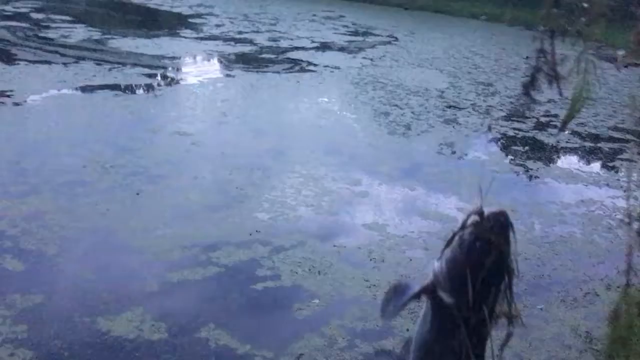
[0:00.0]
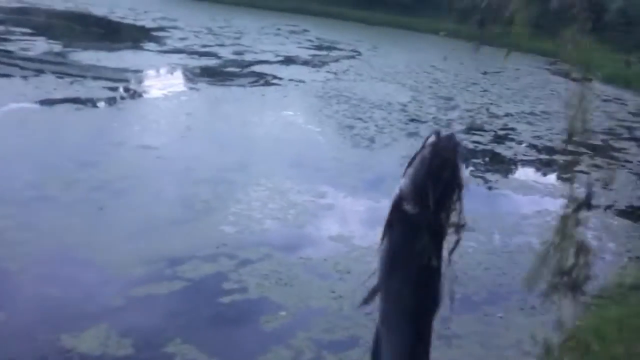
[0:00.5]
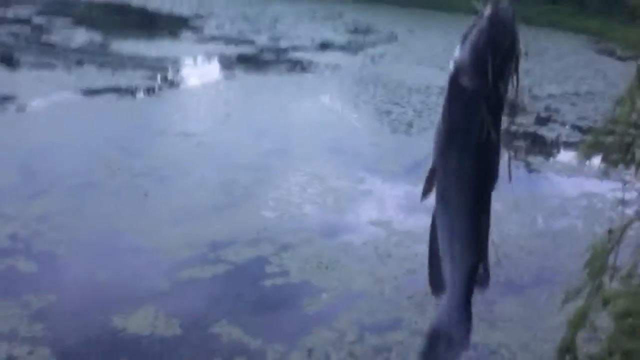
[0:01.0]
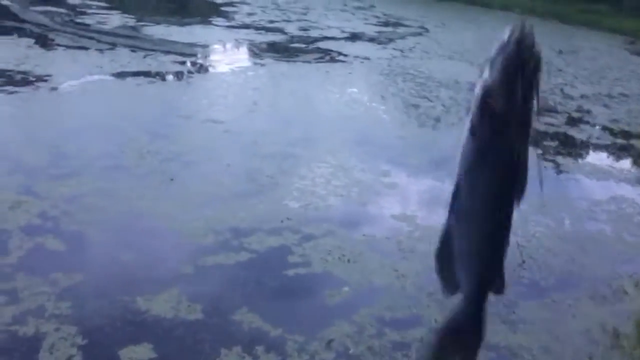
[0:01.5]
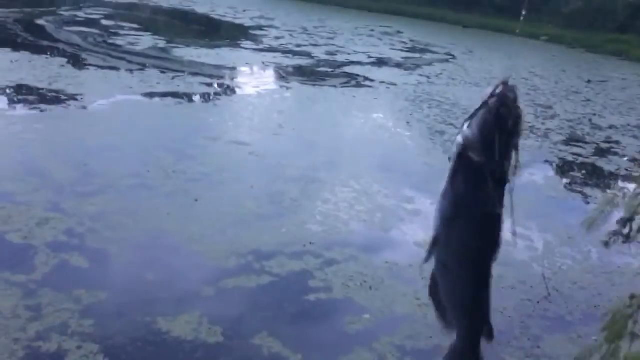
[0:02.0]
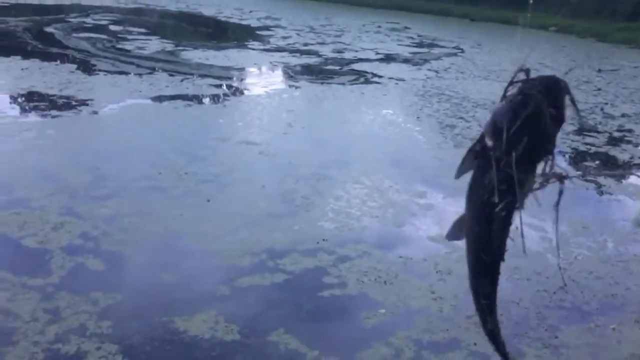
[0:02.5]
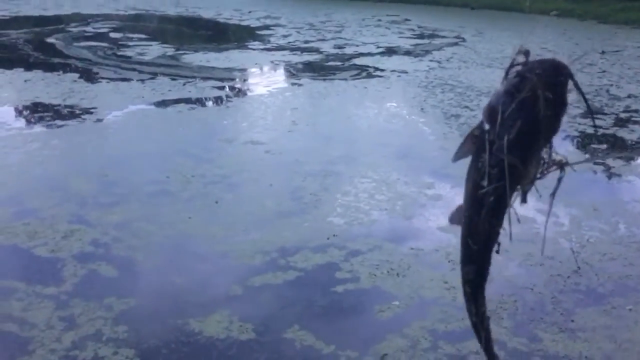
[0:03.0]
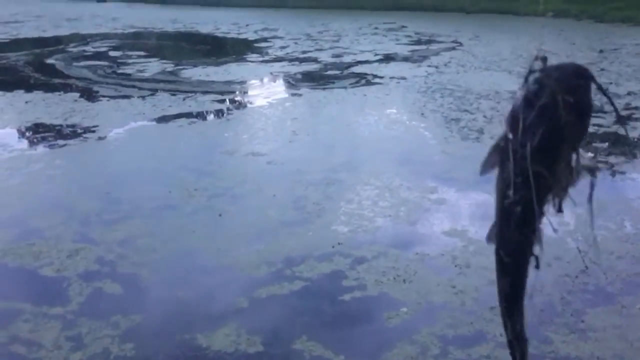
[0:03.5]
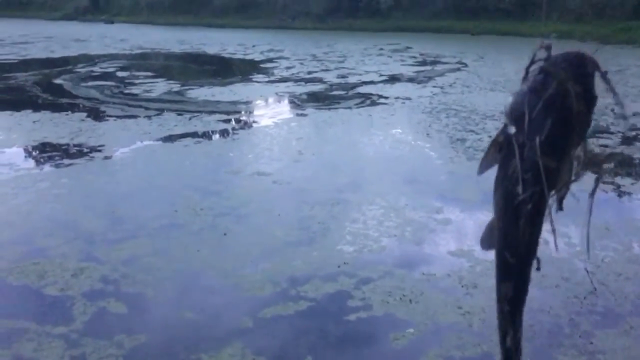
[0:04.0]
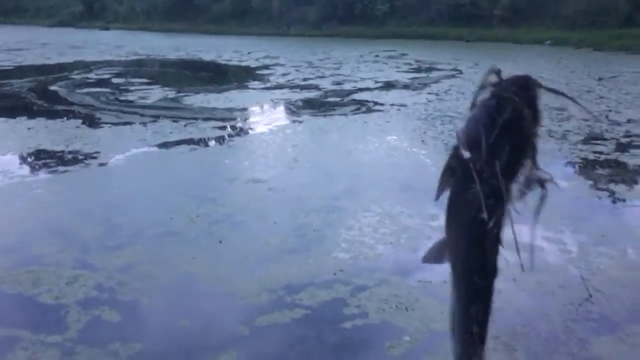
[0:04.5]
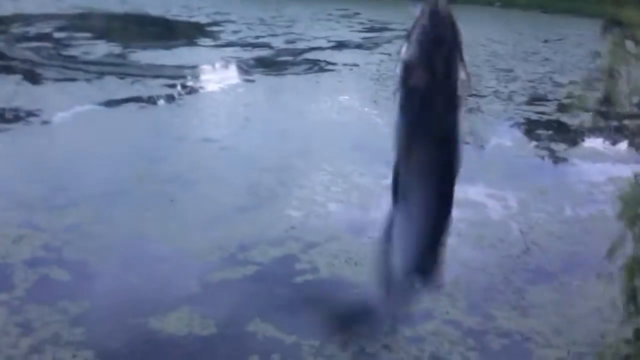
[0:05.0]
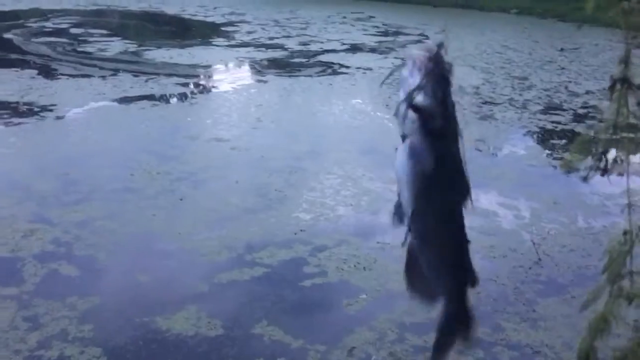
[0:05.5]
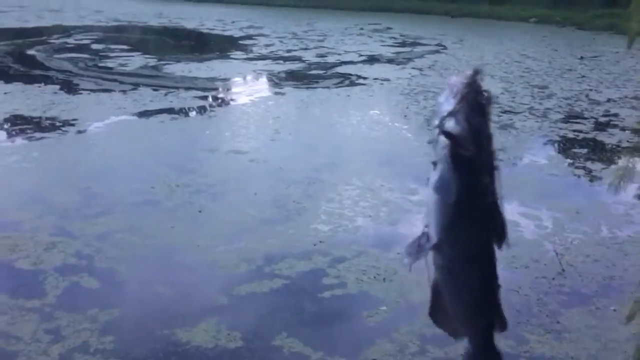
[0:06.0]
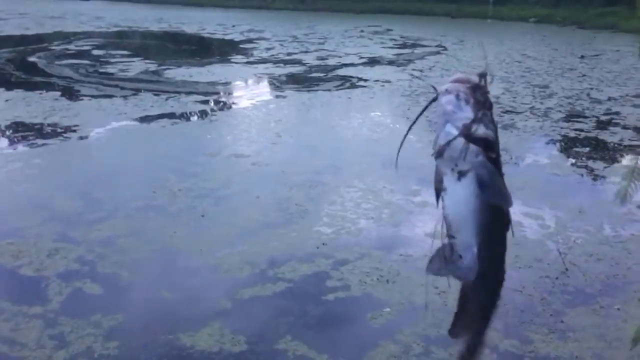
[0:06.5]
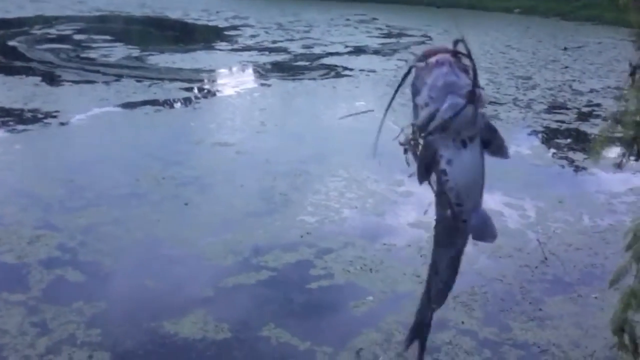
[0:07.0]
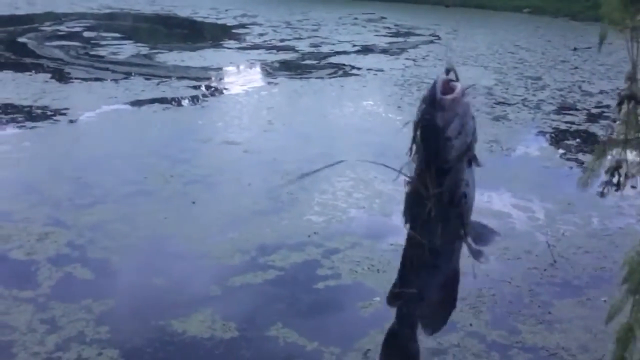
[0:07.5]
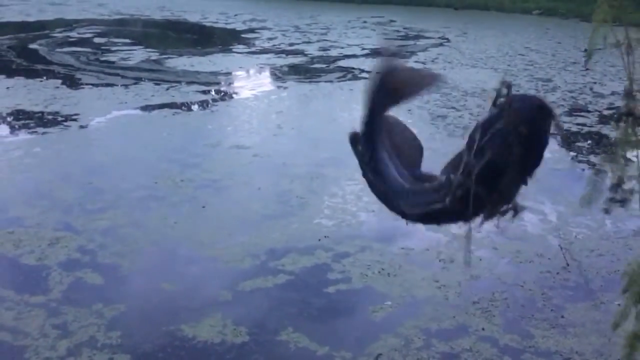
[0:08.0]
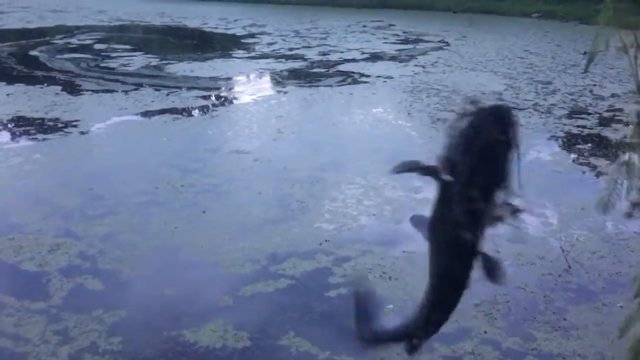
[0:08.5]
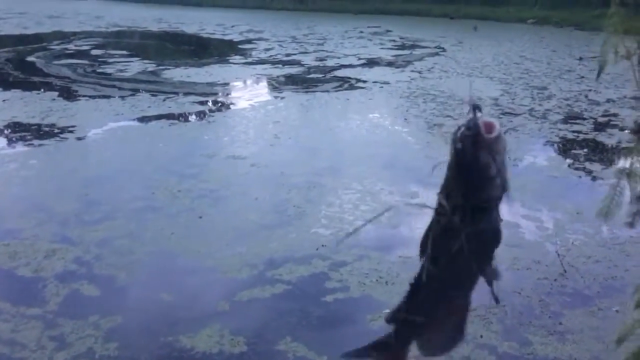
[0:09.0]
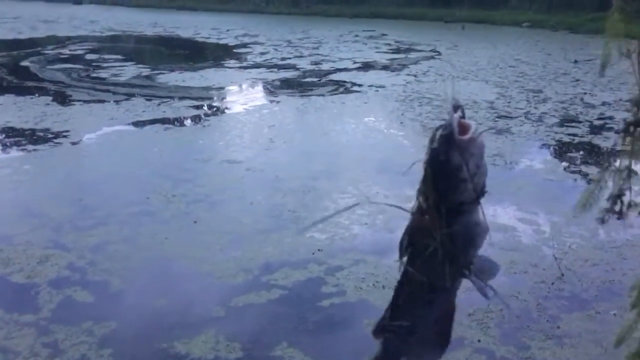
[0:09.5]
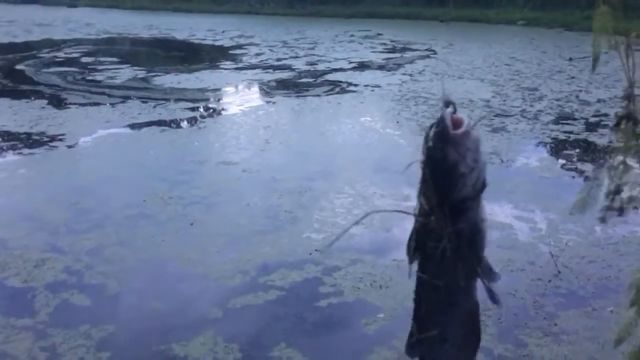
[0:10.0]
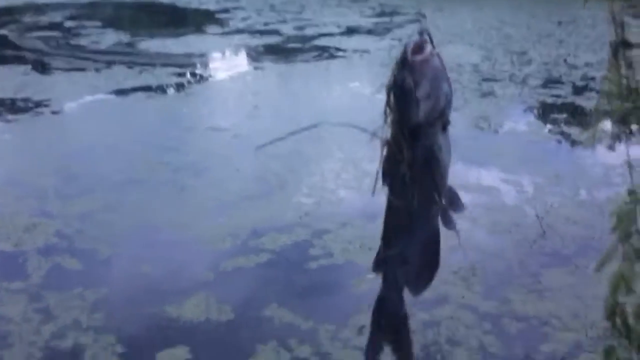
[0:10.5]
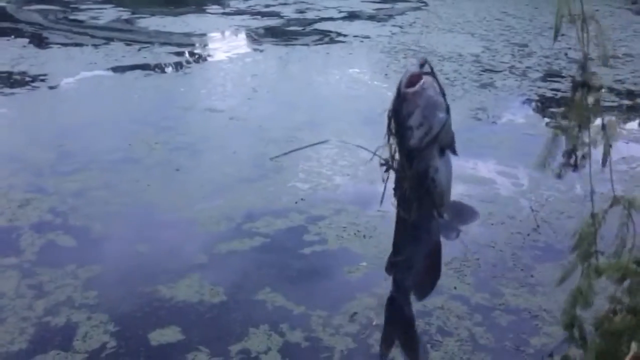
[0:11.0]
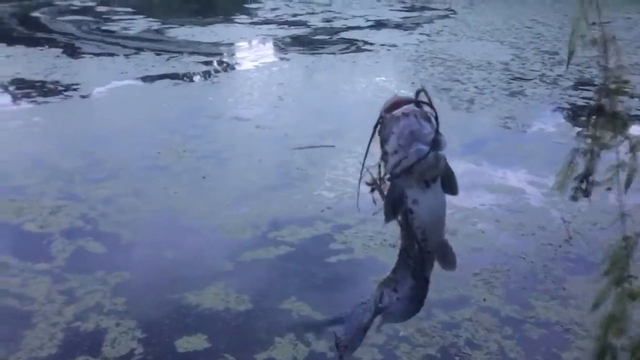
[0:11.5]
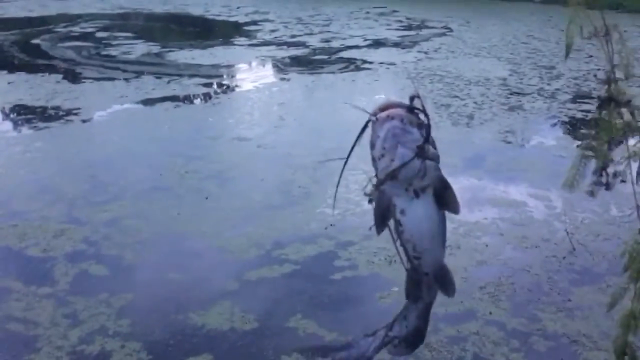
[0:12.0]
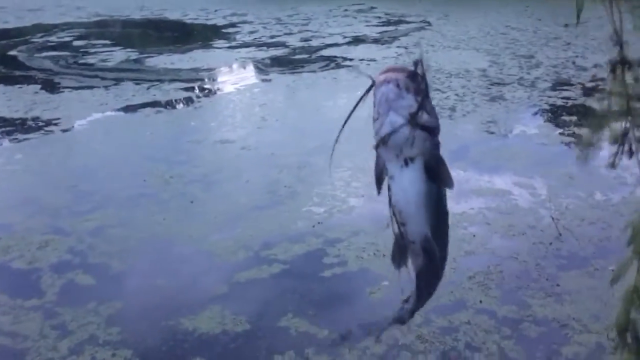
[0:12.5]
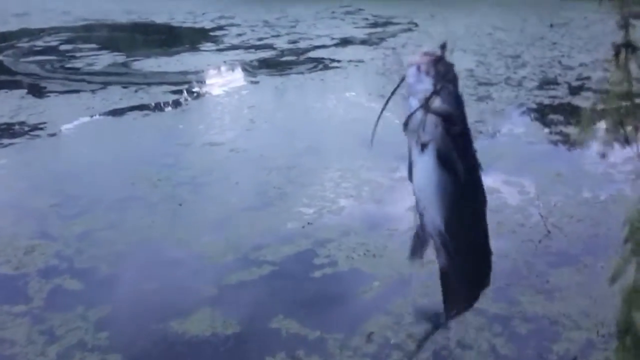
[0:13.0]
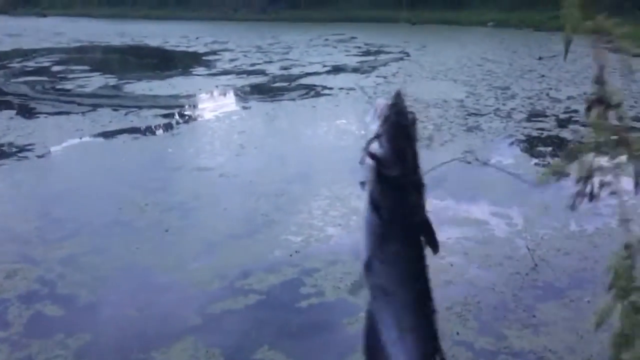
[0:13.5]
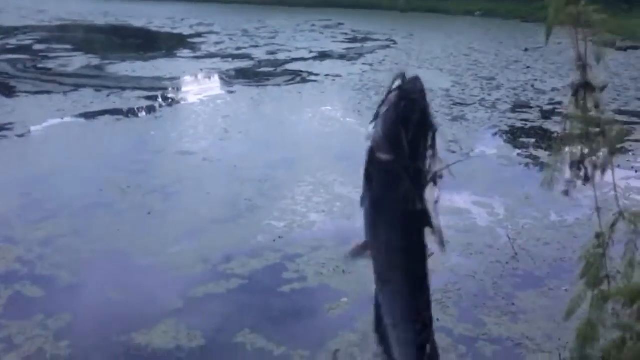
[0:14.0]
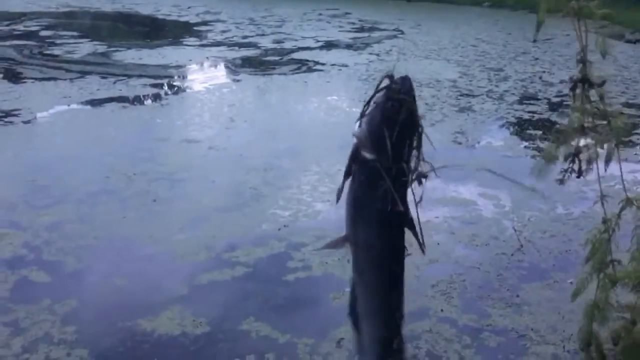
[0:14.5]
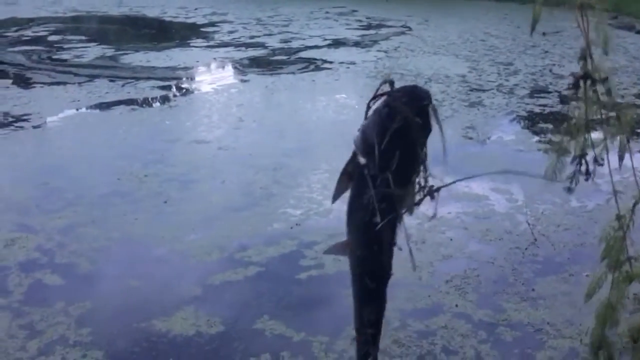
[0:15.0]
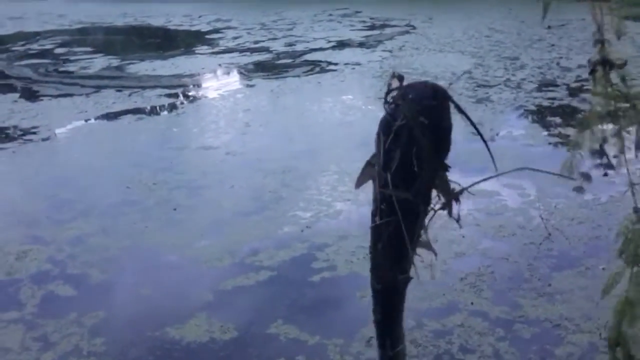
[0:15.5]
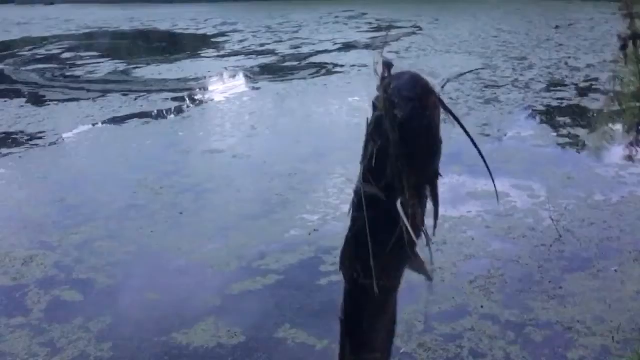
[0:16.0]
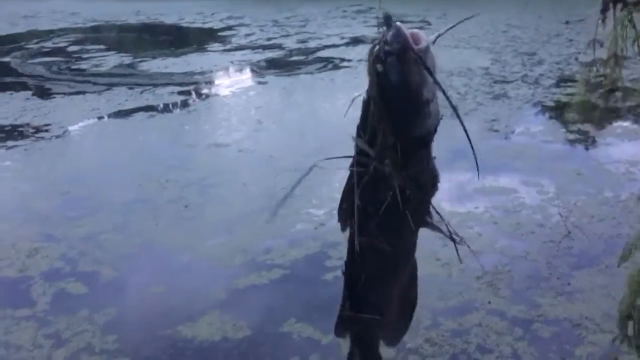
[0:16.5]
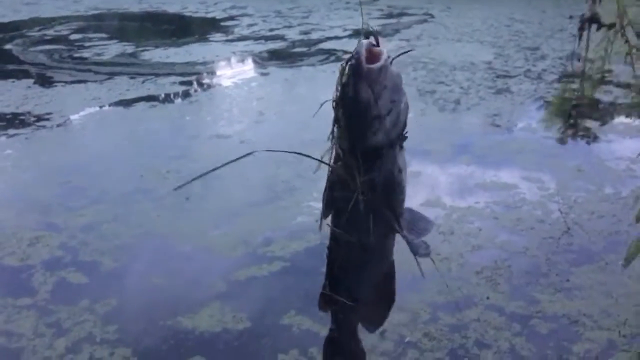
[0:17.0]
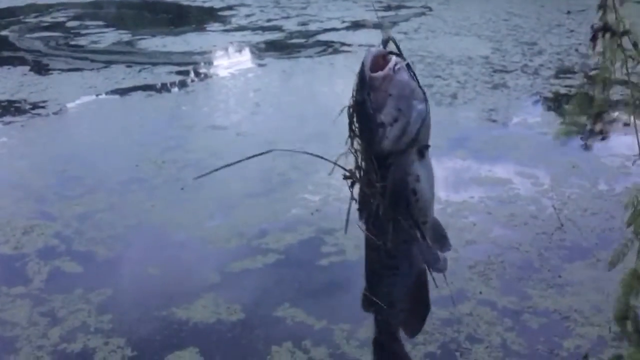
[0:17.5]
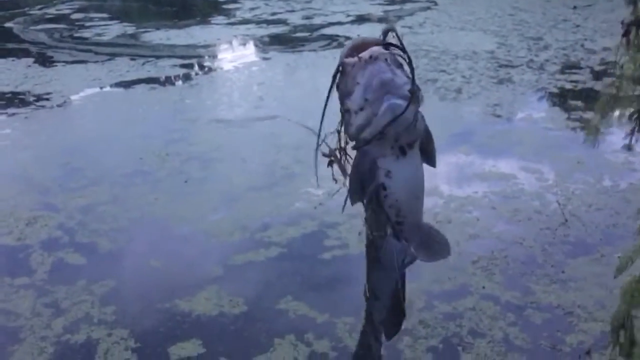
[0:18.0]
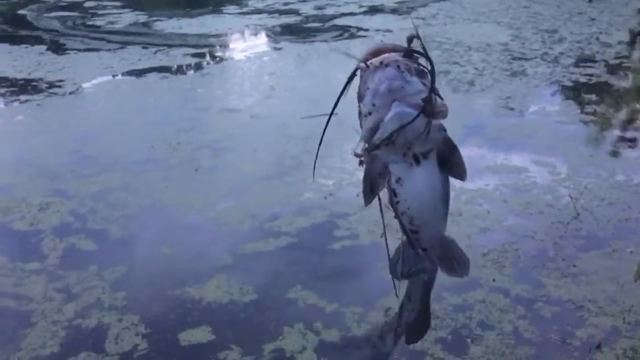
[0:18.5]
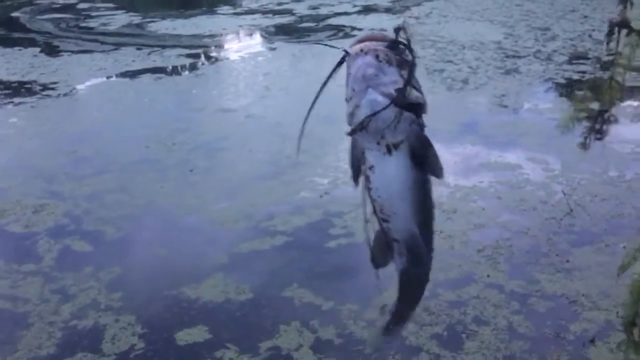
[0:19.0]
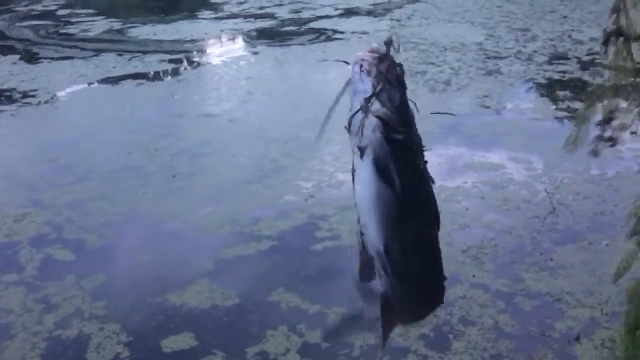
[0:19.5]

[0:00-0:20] A black crab fish hangs on a hook above gray, dirty-looking water, with some leaves showing on the right. The crab fish swings its tail from side to side as it swings on the hook. In the distance, weeds grow at the edges of the water. The water is clearly dirty, not blue or clear but dark with some streaks of white. The crab fish keeps swinging its tail in both directions, maybe fighting for its life and trying to get back into the water, but it stays hooked on the fishing rod.